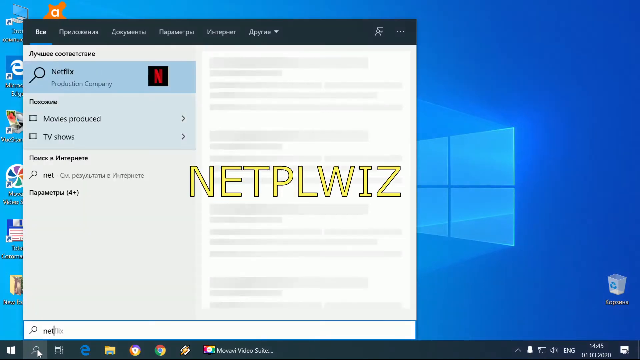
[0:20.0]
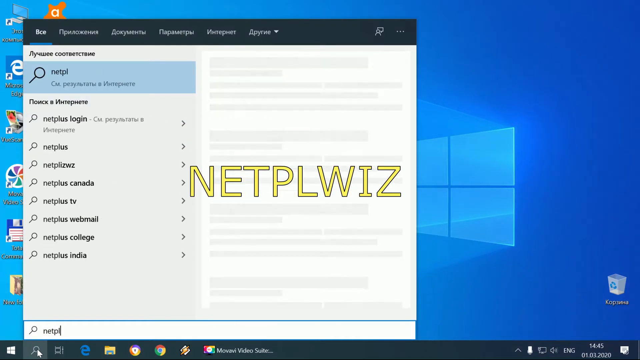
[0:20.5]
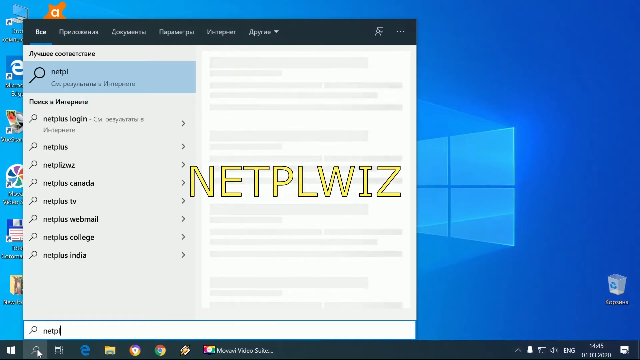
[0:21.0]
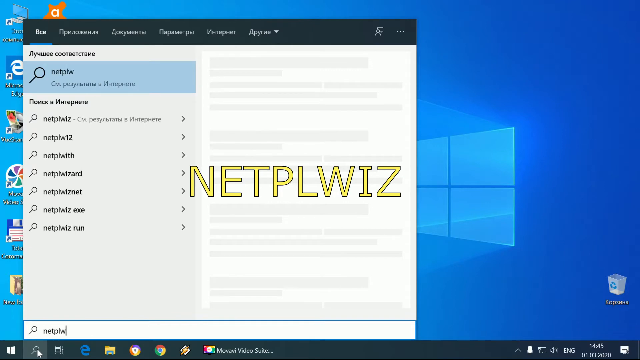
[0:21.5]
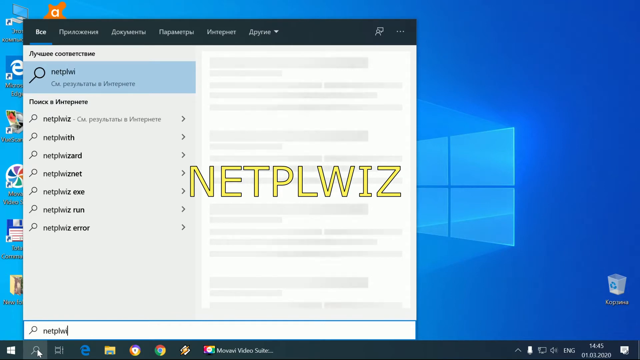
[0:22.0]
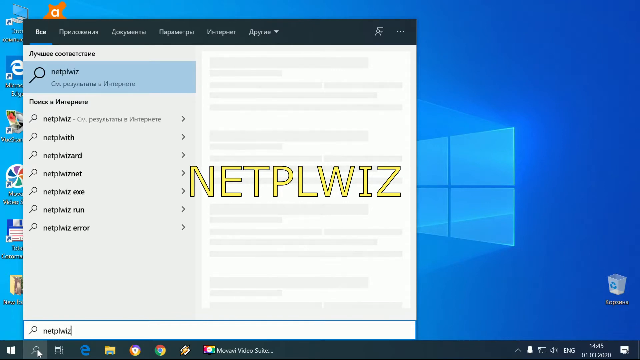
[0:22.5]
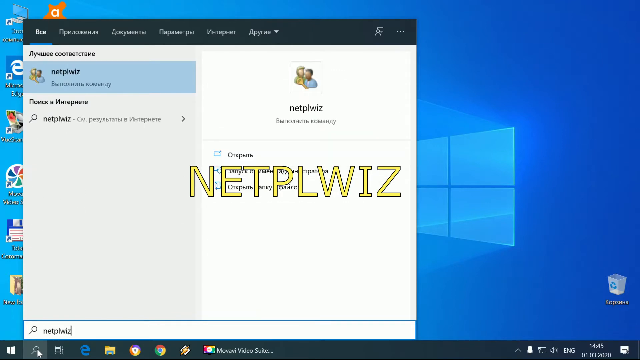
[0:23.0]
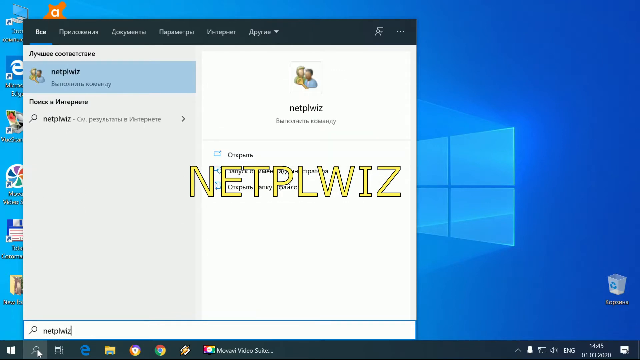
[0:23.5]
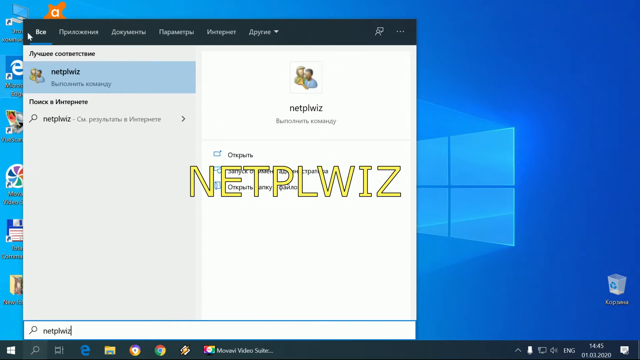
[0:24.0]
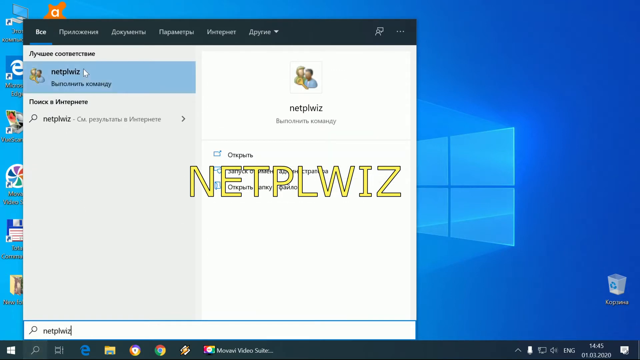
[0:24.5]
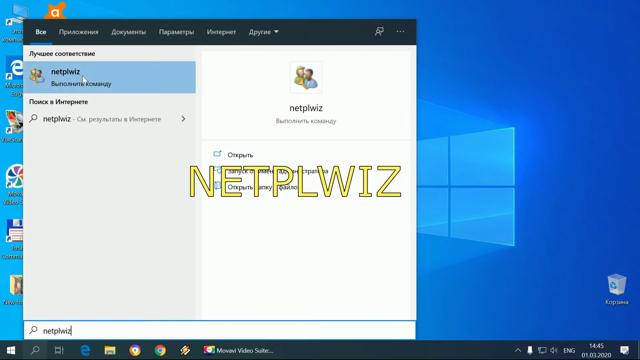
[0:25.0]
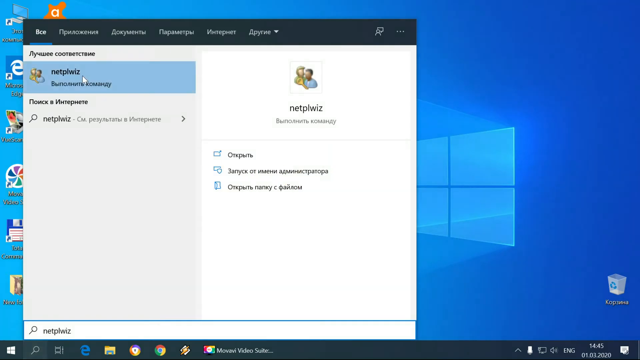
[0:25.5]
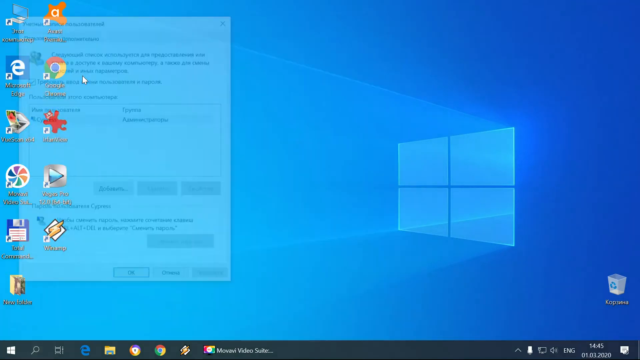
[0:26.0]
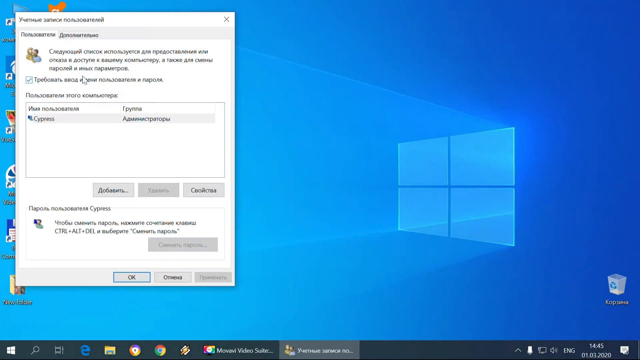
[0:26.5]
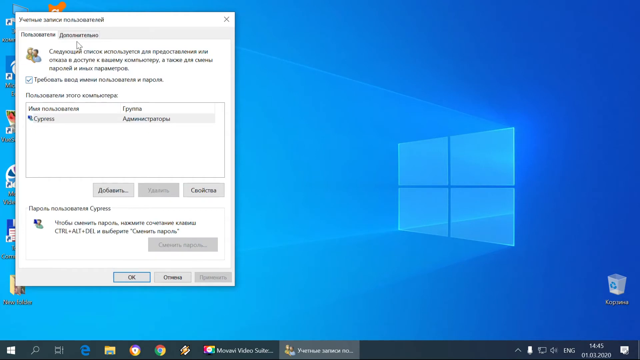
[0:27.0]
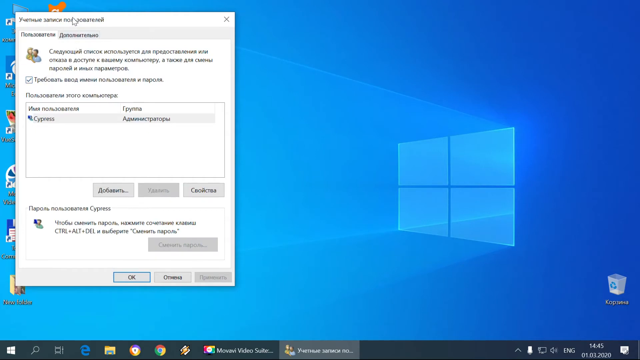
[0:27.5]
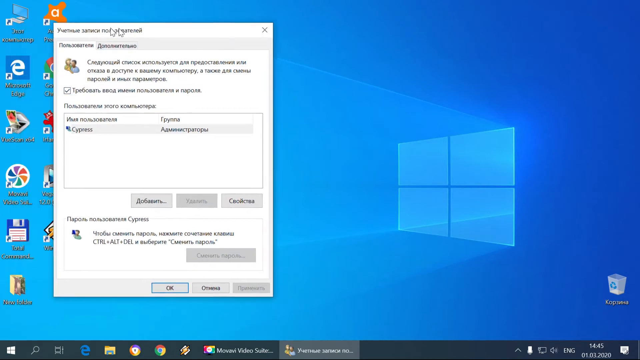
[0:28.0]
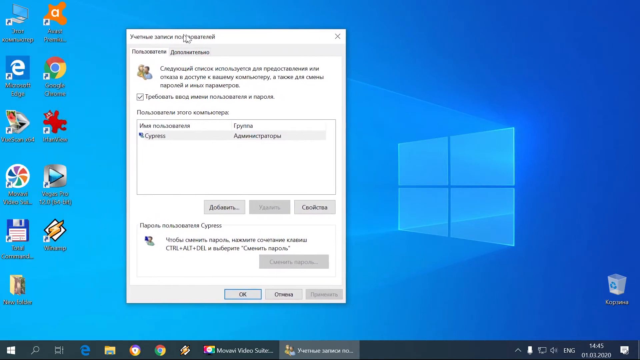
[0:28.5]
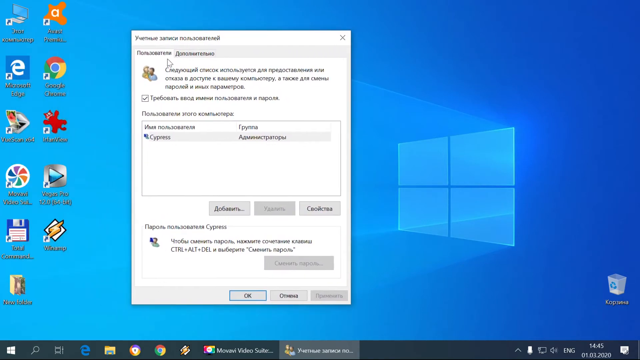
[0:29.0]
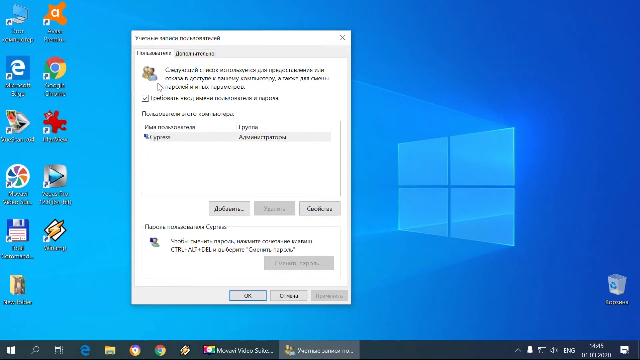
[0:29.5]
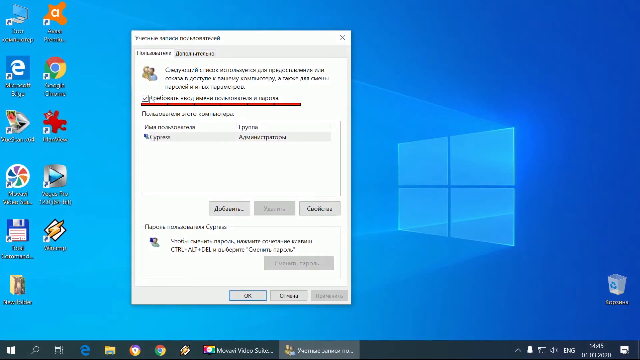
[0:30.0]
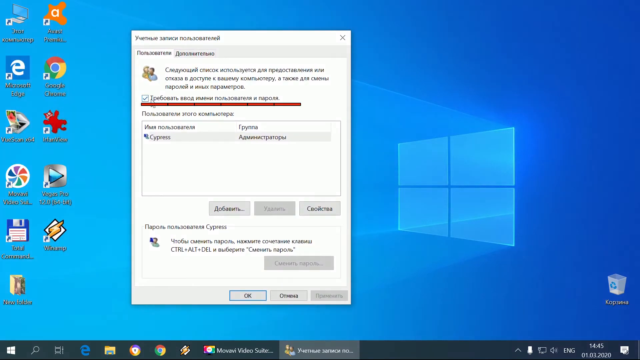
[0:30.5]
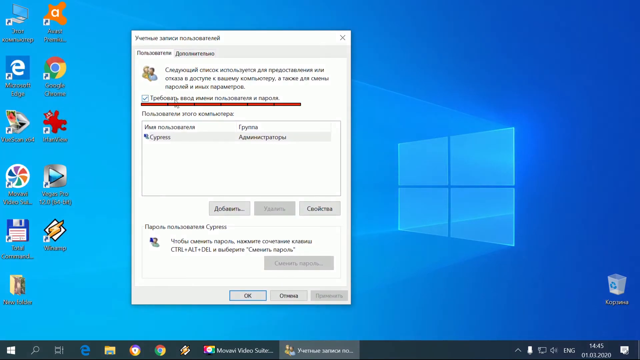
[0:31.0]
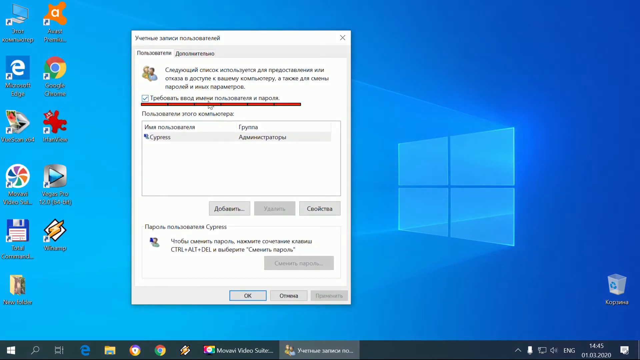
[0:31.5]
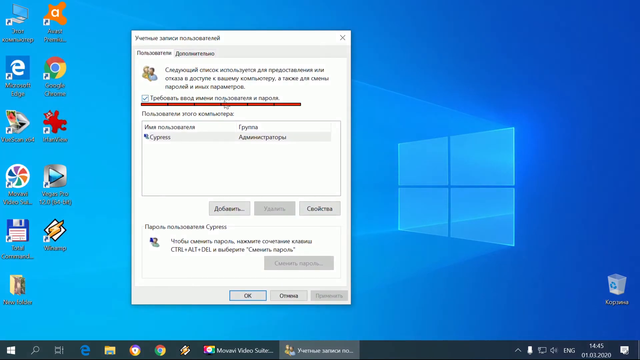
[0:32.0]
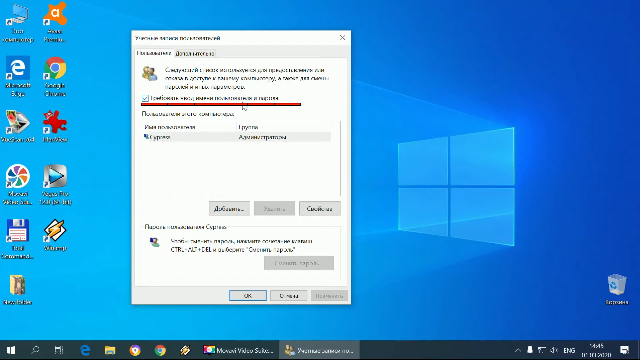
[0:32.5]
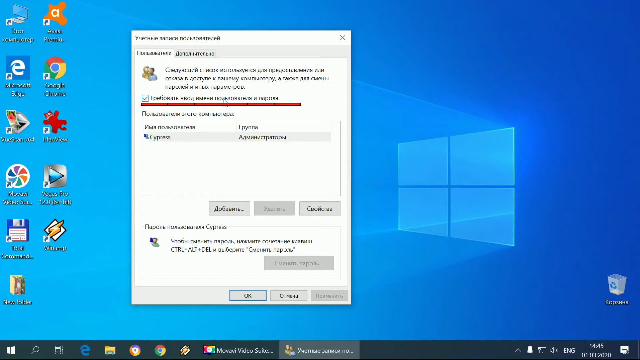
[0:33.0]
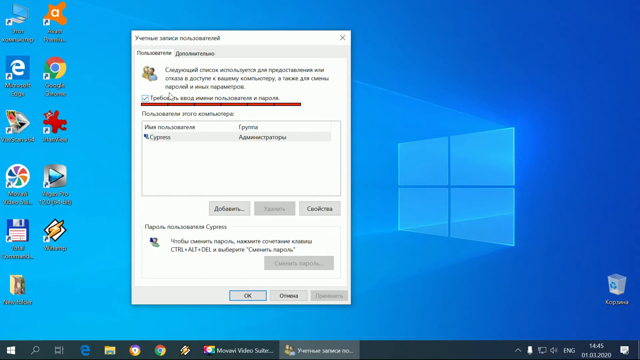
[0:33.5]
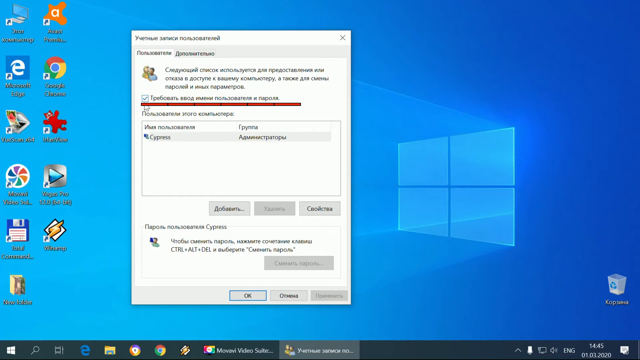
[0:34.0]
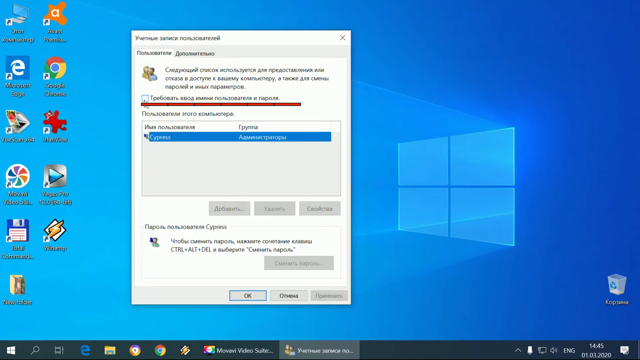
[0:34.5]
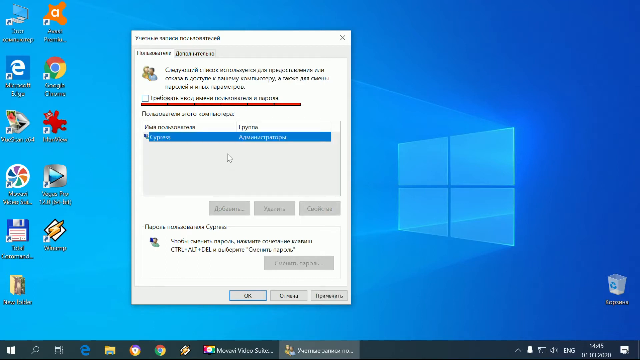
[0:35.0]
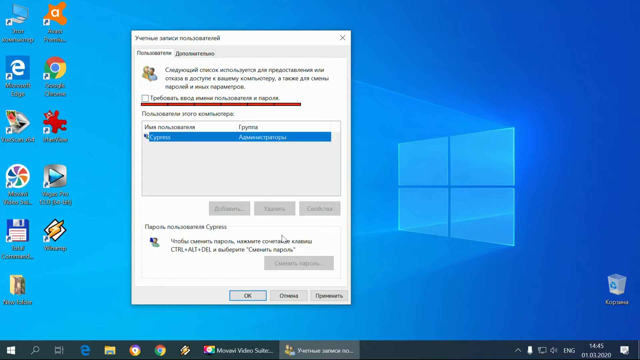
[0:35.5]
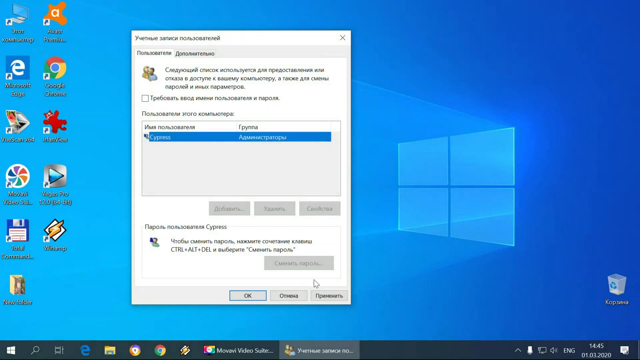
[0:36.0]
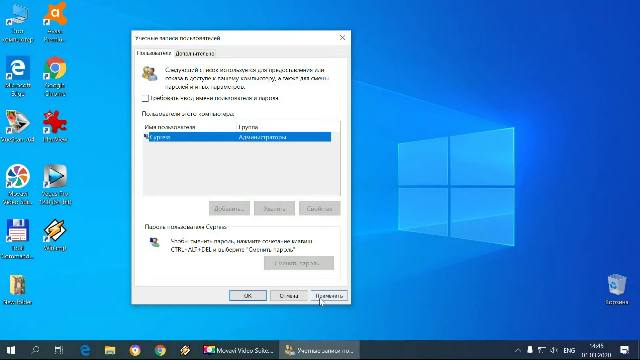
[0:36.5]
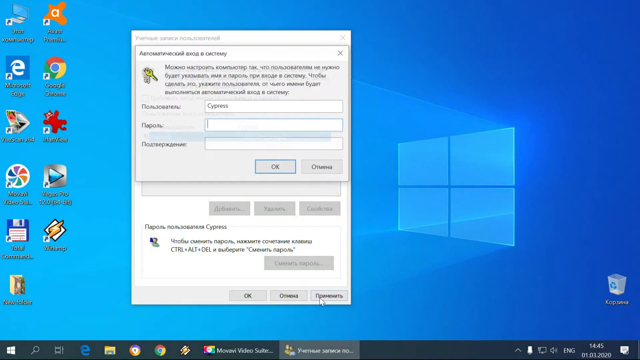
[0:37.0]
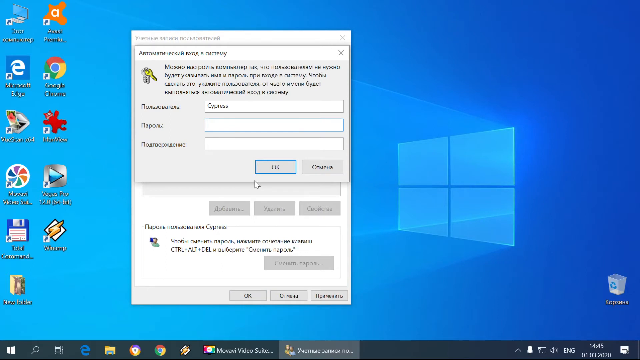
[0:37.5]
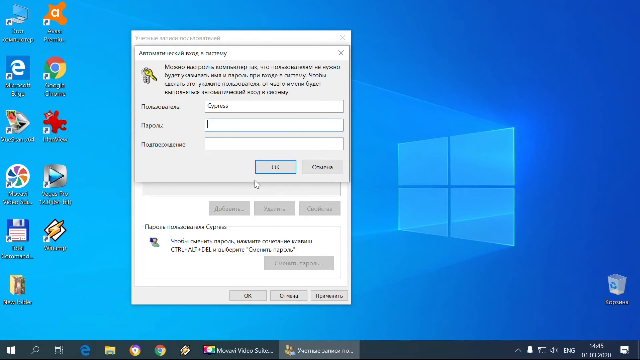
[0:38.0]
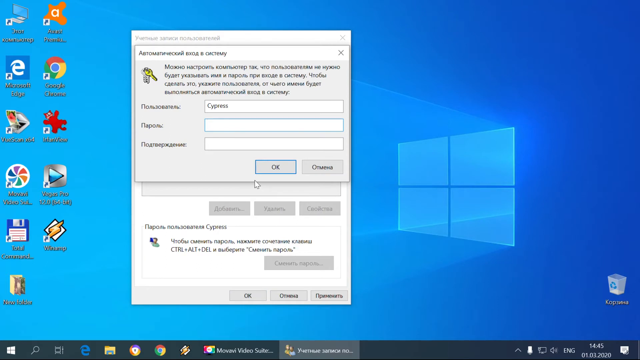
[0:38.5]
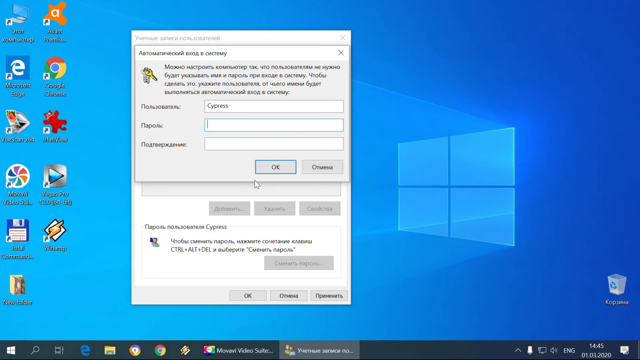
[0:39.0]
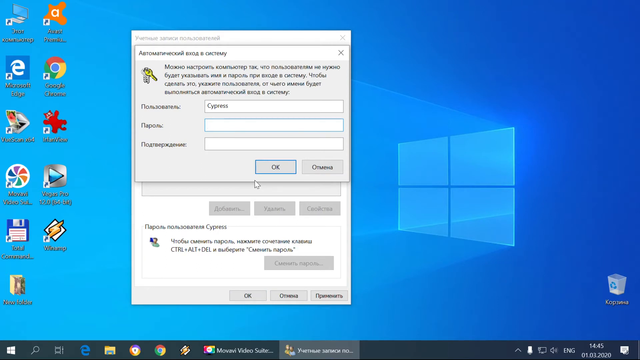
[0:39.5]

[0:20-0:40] A screen capture shows someone on a Windows computer with a search window open; the language appears to be German. The person searches for netplwiz, clicks on the result, and a box pops up. They run the mouse across a red bar toward the top third of the page, check a box, and click another button at the bottom. A prompt asks for their security details, a key box pops up, and they hit OK. They type one character for their password, which is blocked out and appears as a dot rather than a letter. As some windows open, the person slides them over so they are more toward the center of the screen instead of off to the left.